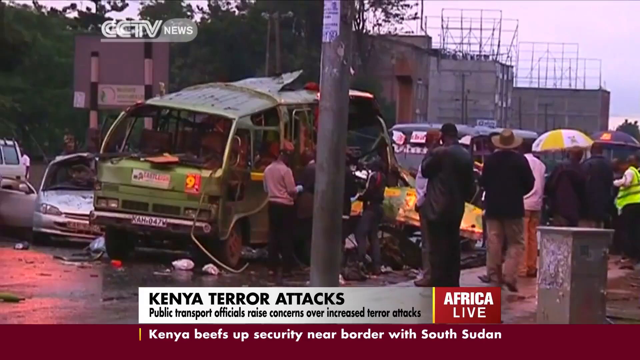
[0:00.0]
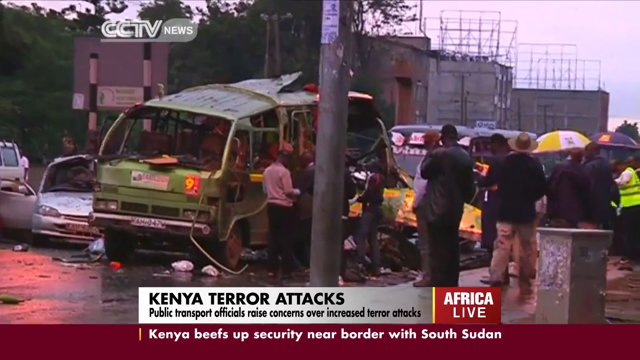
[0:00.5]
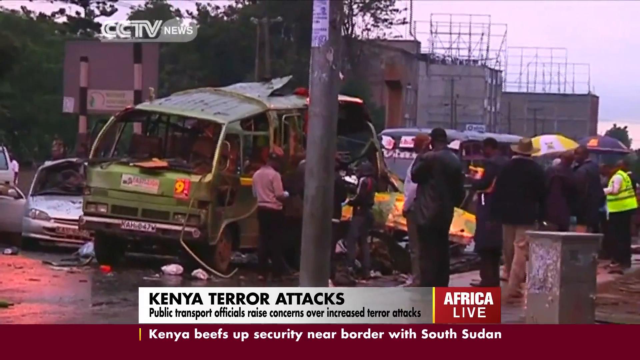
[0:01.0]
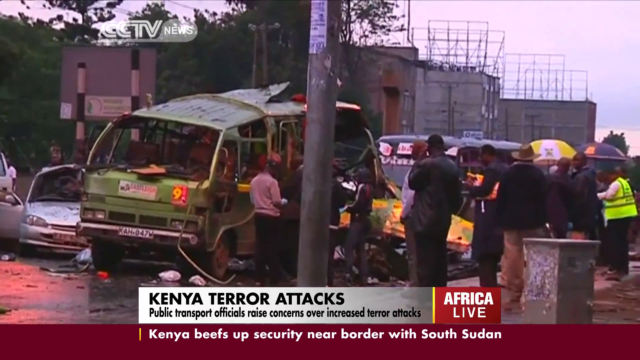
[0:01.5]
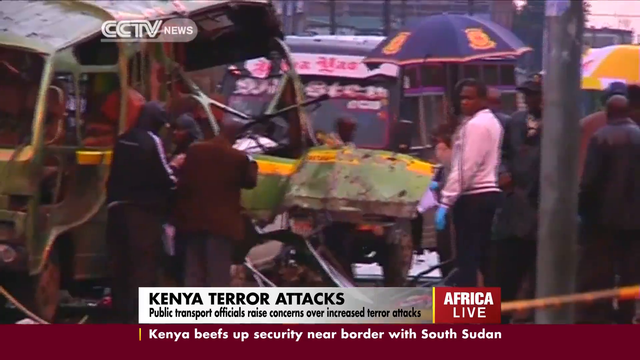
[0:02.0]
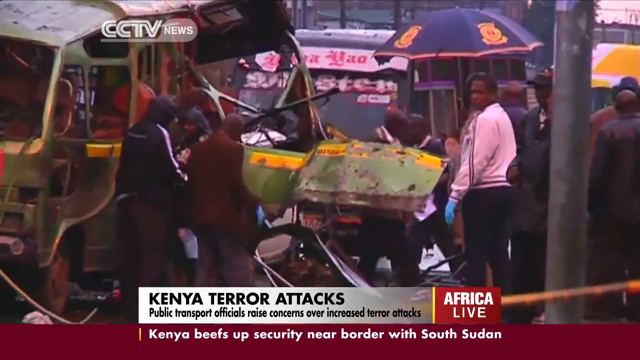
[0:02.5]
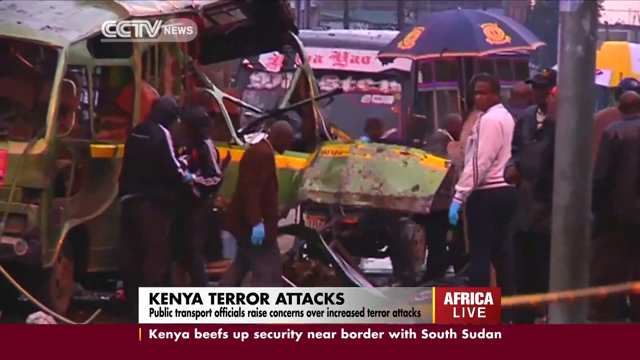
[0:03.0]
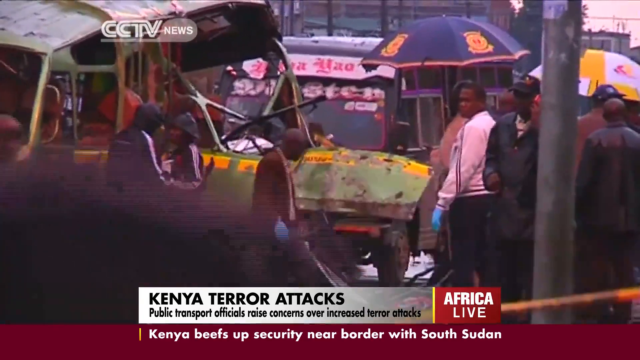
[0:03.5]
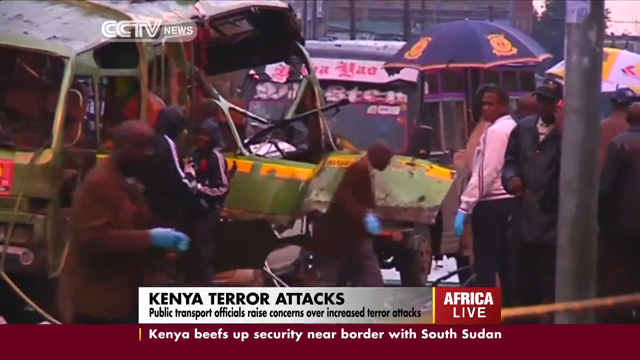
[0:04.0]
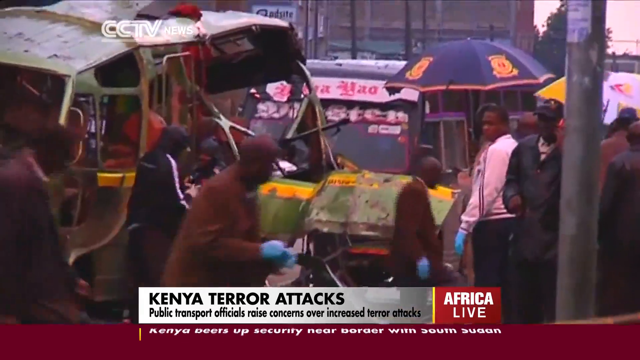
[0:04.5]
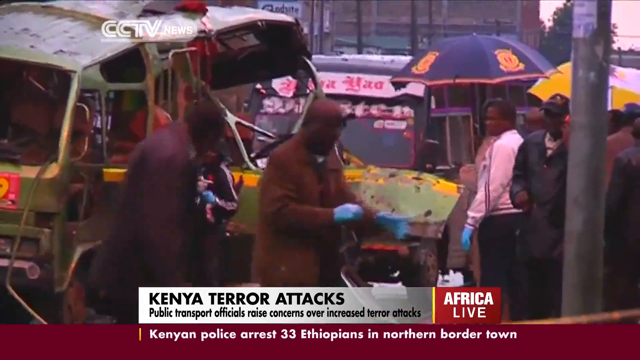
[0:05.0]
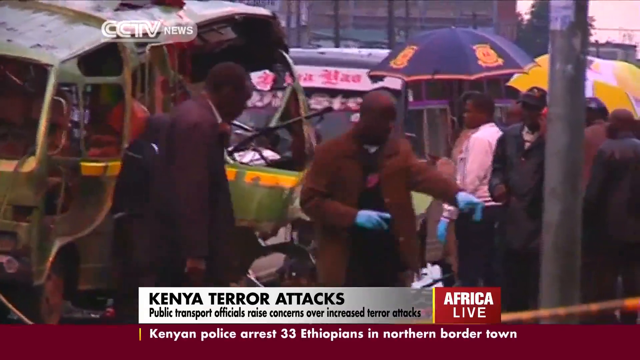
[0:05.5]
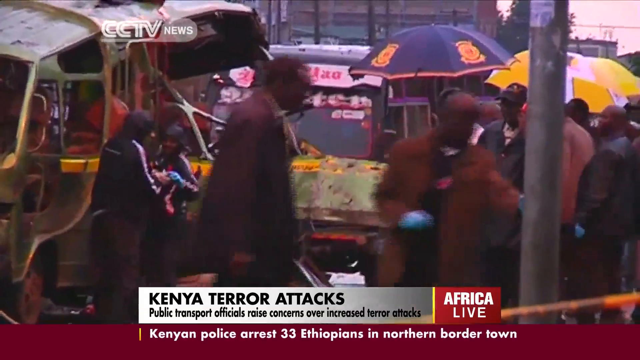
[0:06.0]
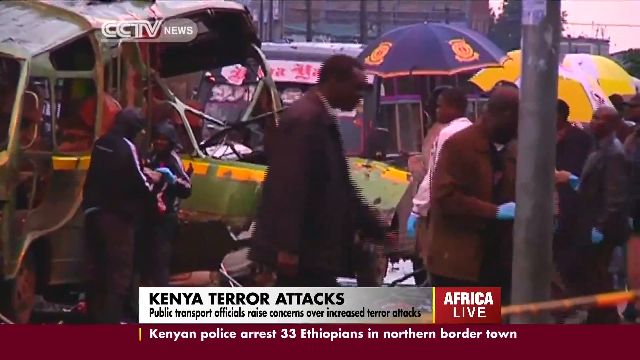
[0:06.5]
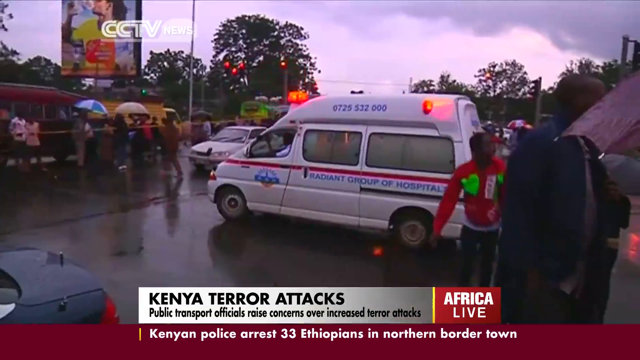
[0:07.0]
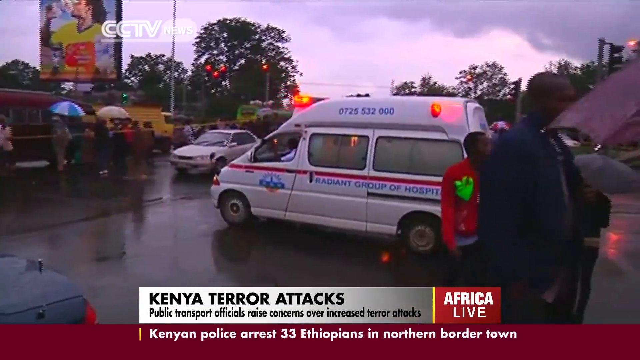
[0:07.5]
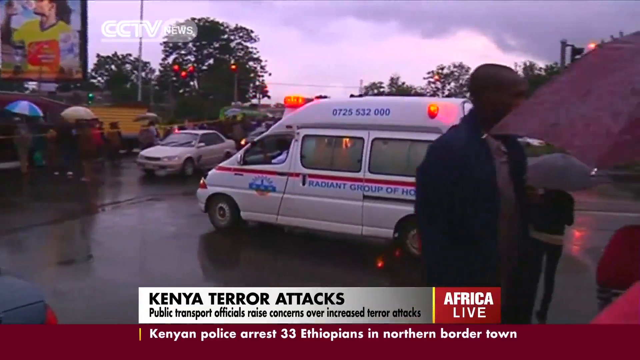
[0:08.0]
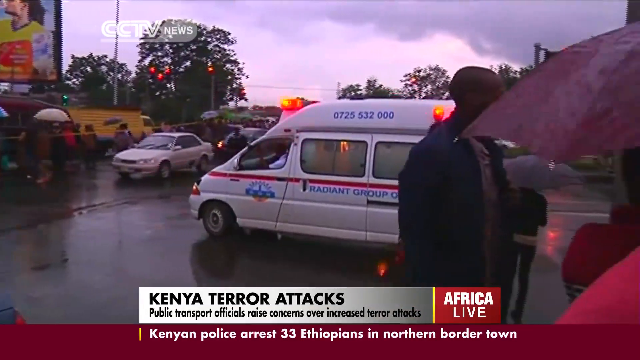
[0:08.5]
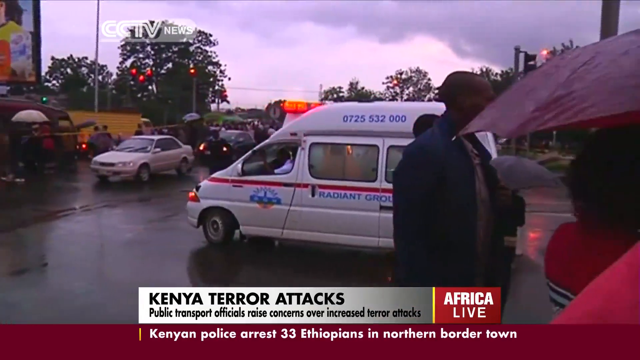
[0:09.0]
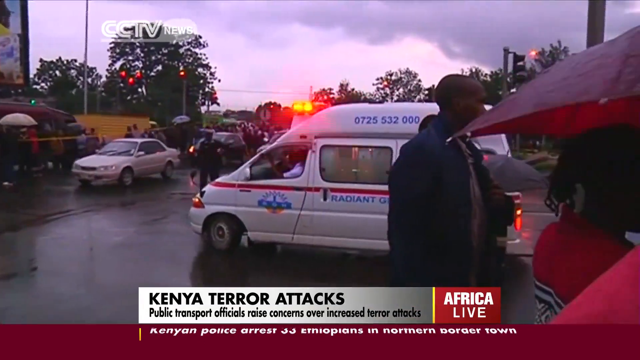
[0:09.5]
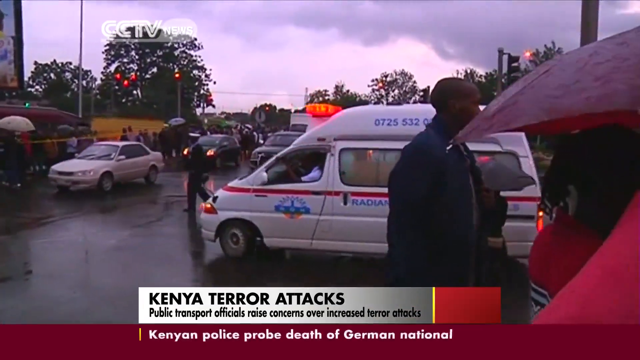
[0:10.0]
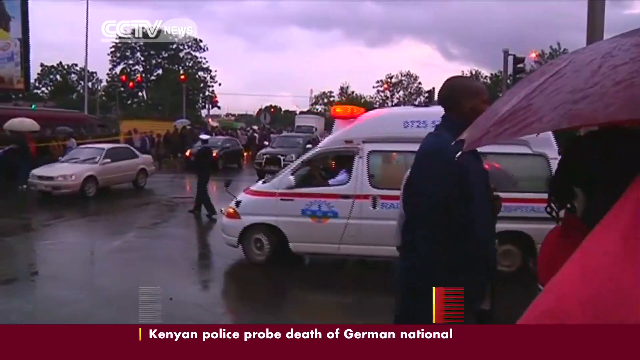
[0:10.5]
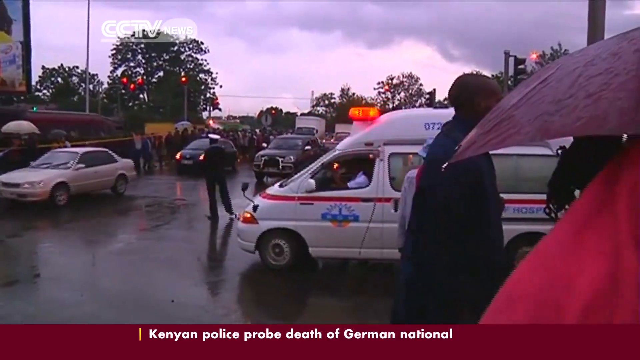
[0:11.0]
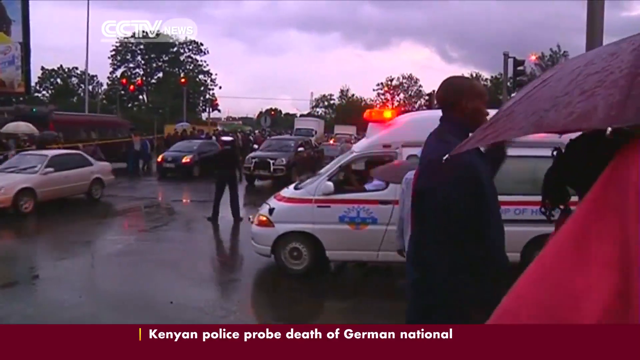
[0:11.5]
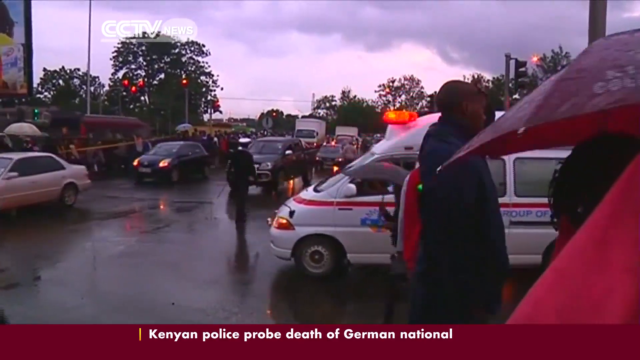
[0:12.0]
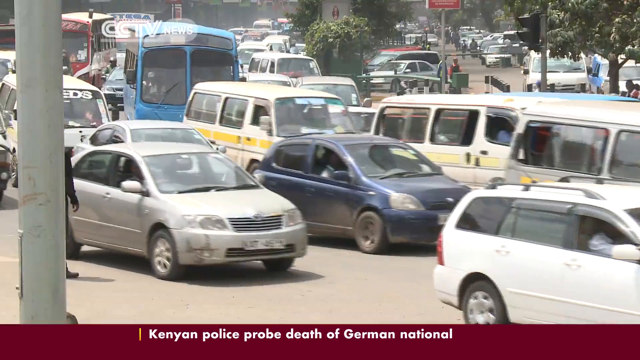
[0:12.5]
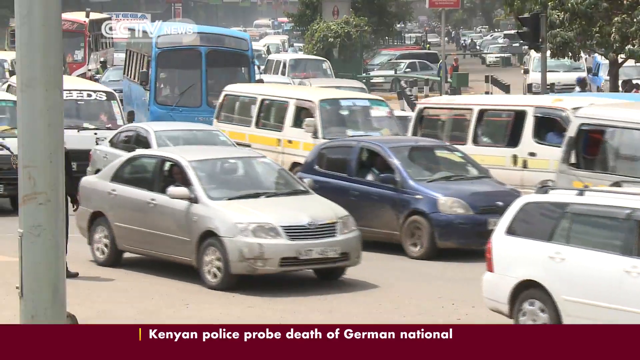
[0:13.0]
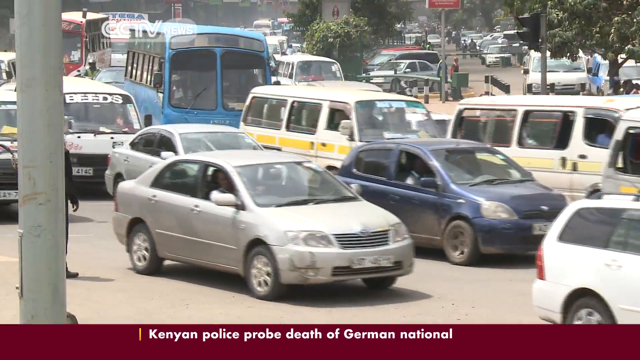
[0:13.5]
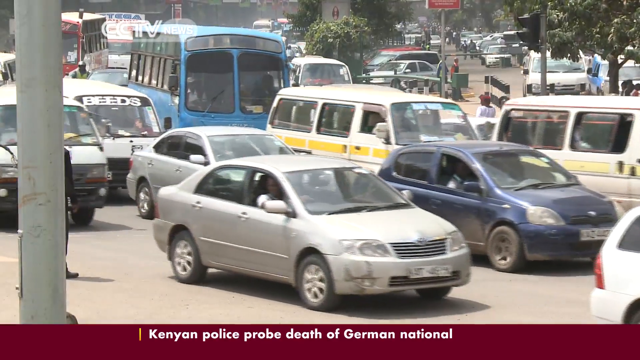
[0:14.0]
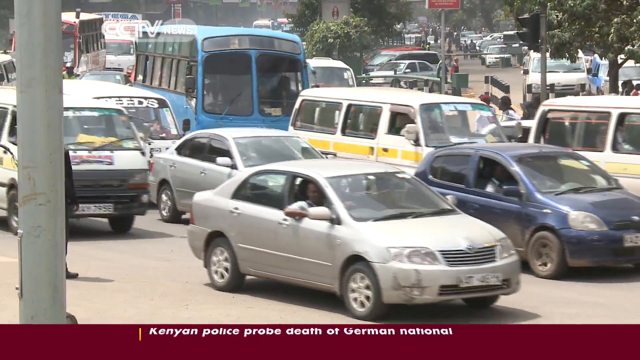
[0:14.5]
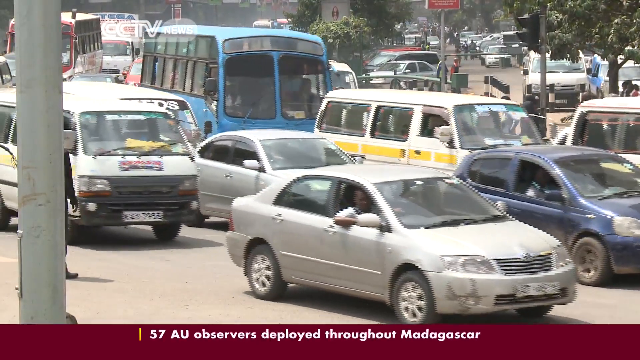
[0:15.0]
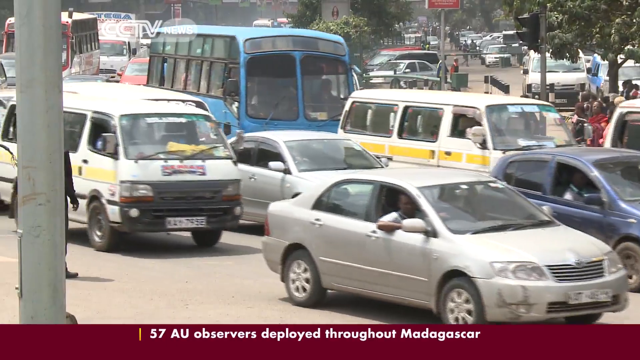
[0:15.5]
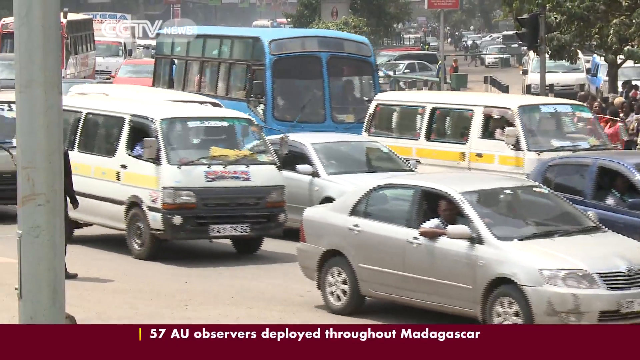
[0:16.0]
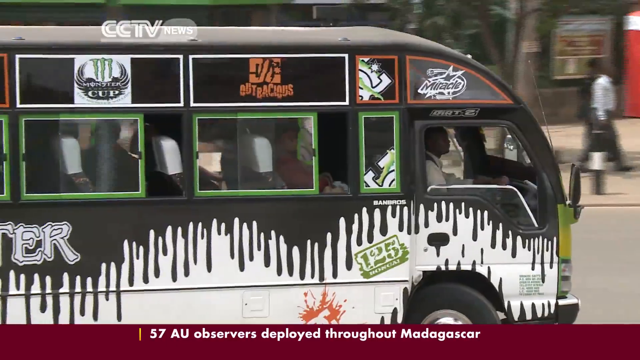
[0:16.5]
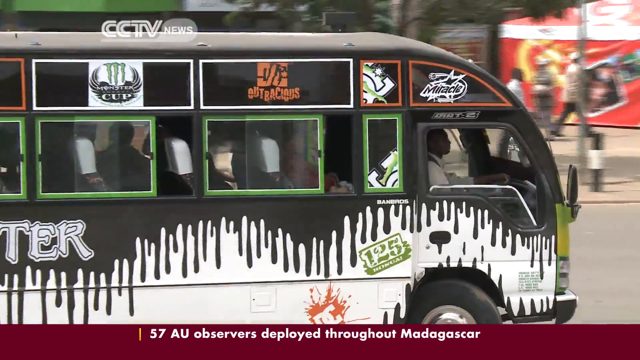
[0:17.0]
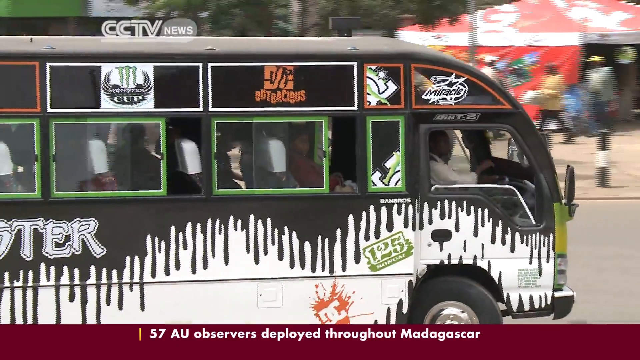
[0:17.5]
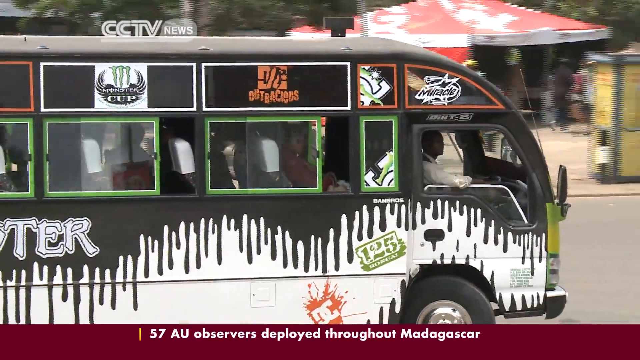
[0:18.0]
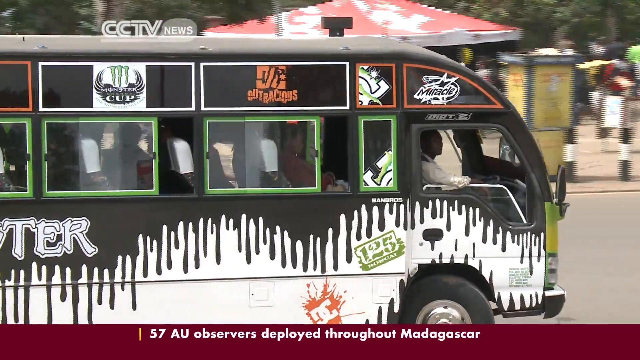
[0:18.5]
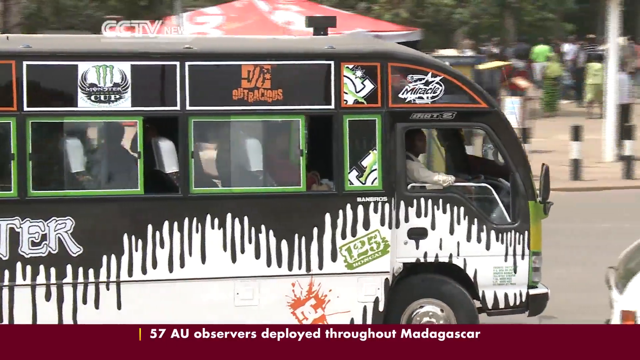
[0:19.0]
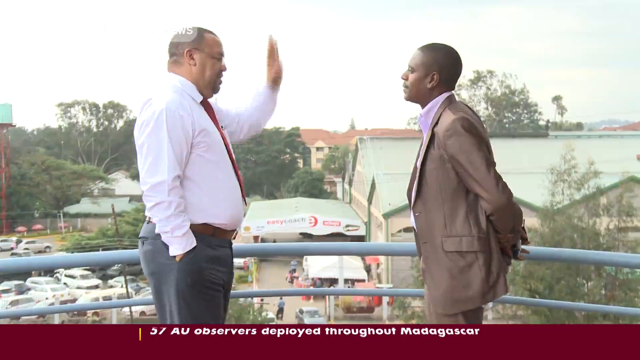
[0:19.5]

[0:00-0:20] The screen shows "Africa live" with text about "Kenya terror attacks": "public transport officials raised concerns over increased terror attacks" and "Kenya beefs up security near the border with South Sudan." What looks like a green bus is heavily damaged, and people stand around it looking at what happened. It is wet outside. Some of the workers wear blue gloves and seem to be investigating, picking things up. An ambulance backs up with its lights on. The scene then changes to daytime, showing different buses and three or four lanes of traffic barely moving, one vehicle after another. A bus that is painted and decorated appears. Two men stand up on a balcony, facing each other and beginning to talk; one of them might be a reporter.